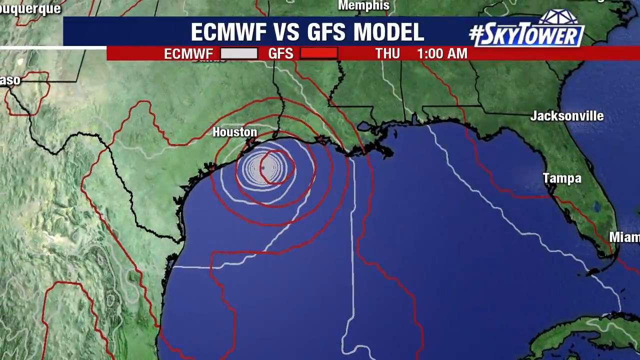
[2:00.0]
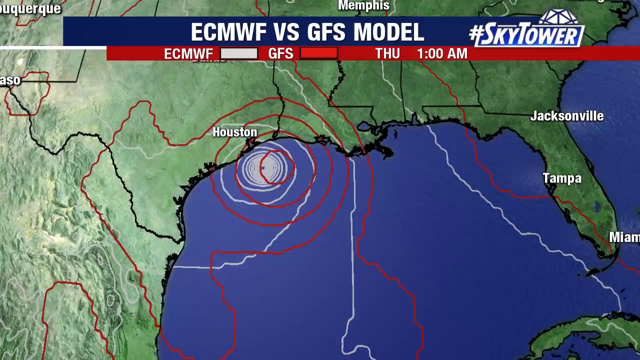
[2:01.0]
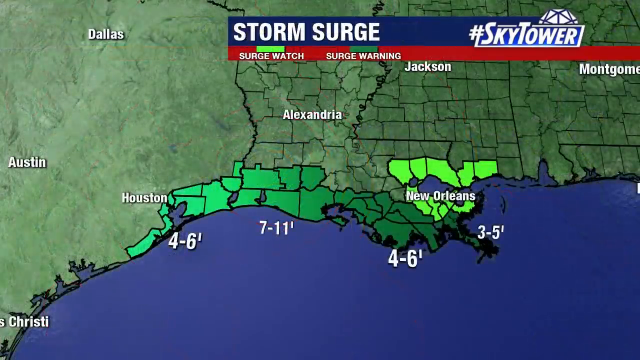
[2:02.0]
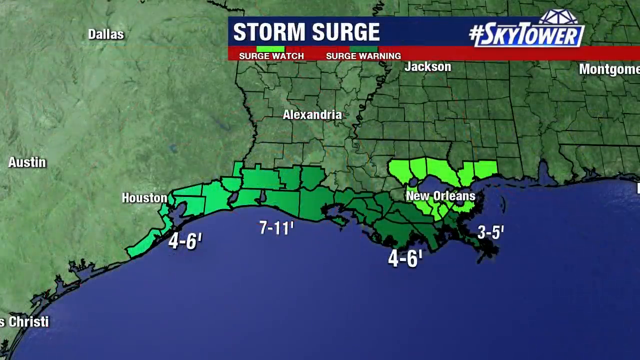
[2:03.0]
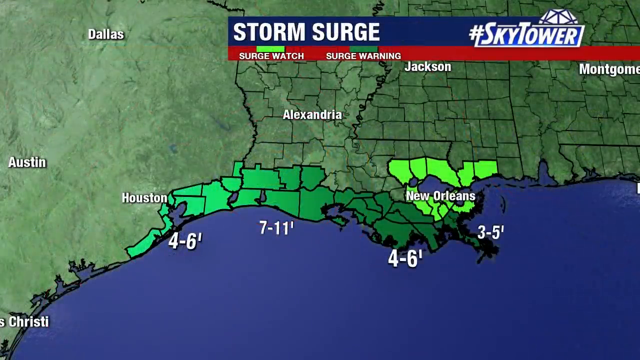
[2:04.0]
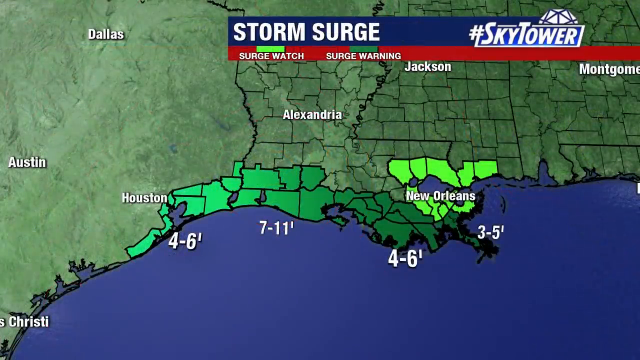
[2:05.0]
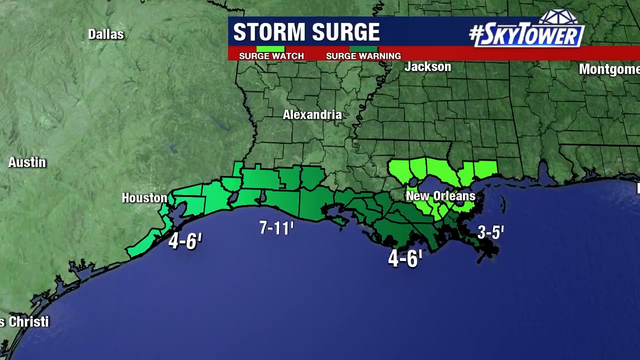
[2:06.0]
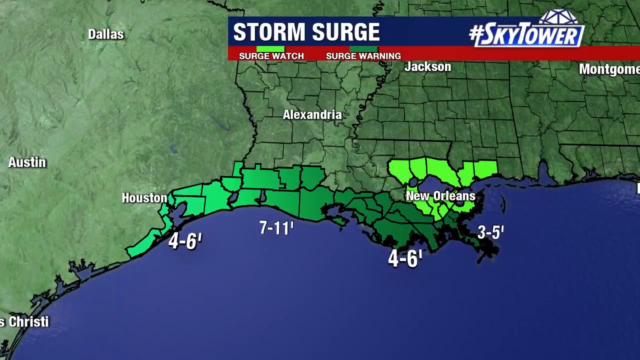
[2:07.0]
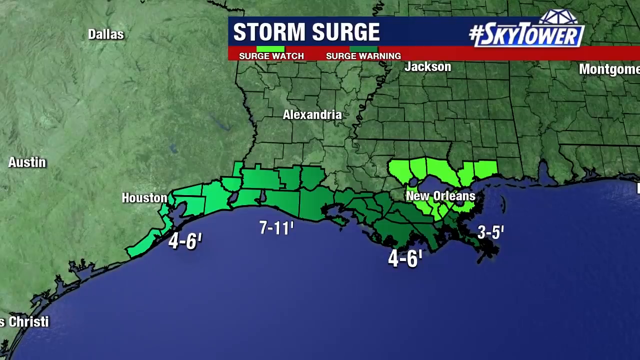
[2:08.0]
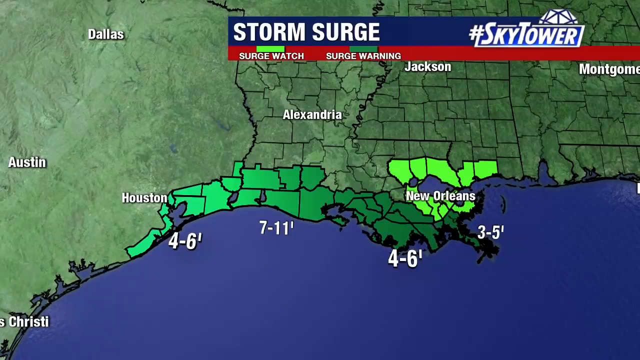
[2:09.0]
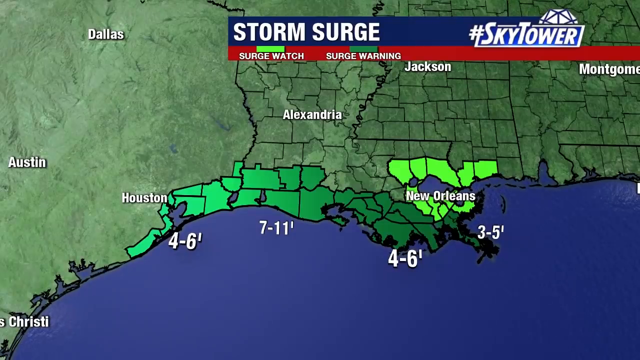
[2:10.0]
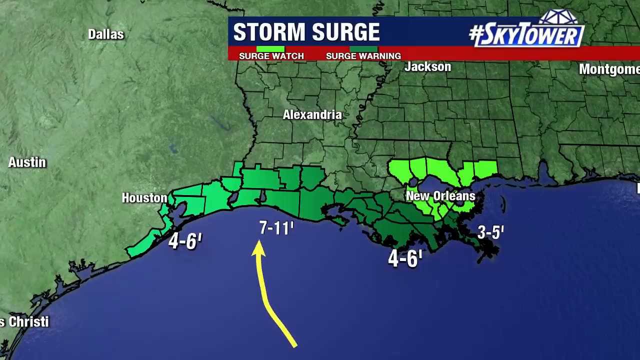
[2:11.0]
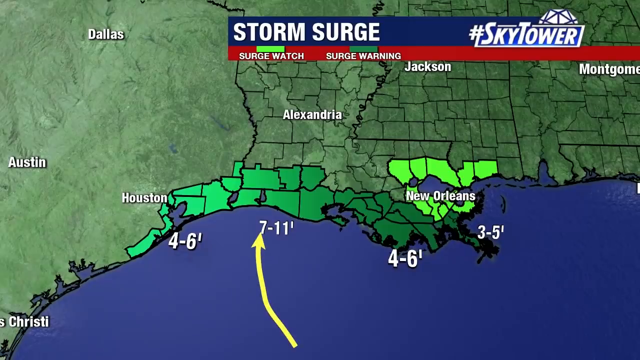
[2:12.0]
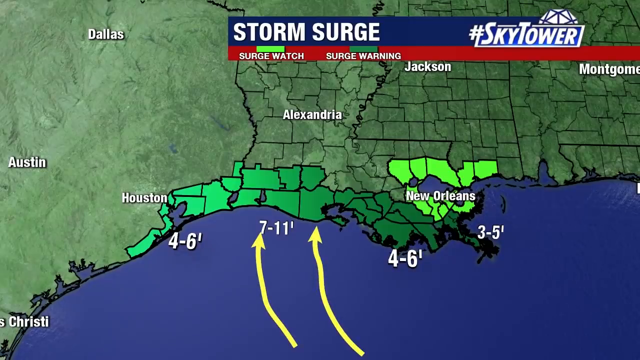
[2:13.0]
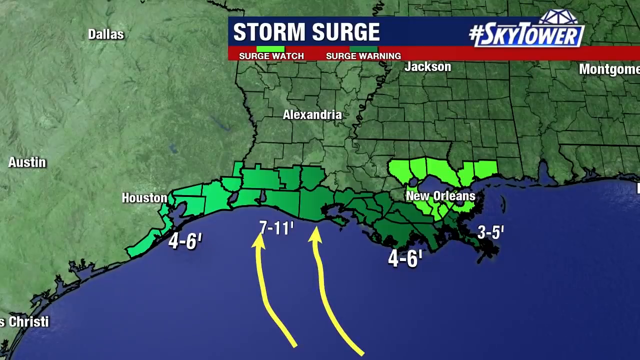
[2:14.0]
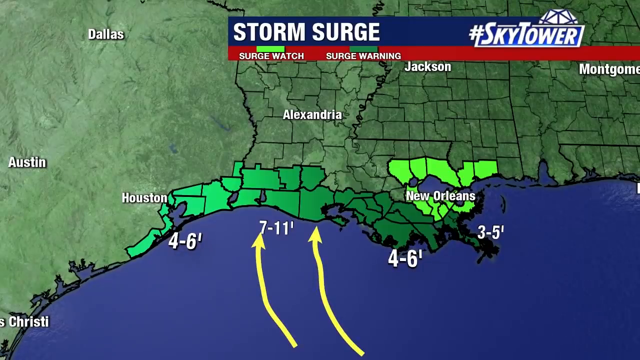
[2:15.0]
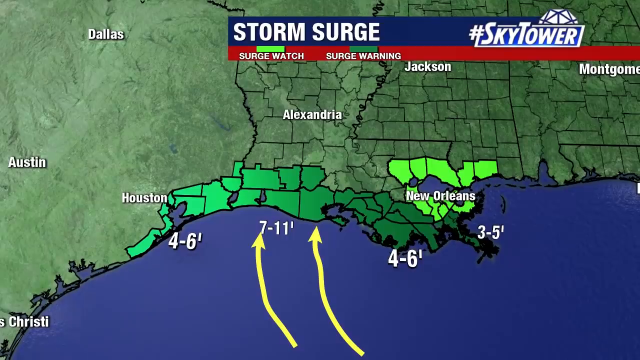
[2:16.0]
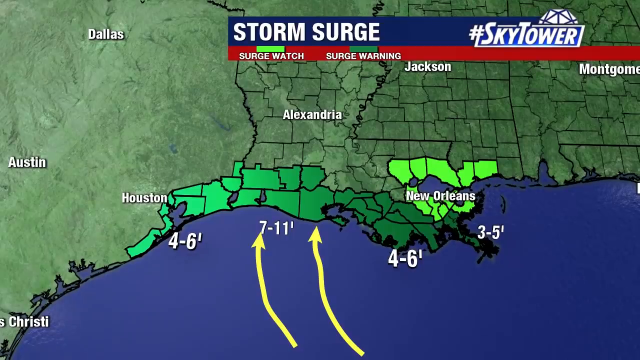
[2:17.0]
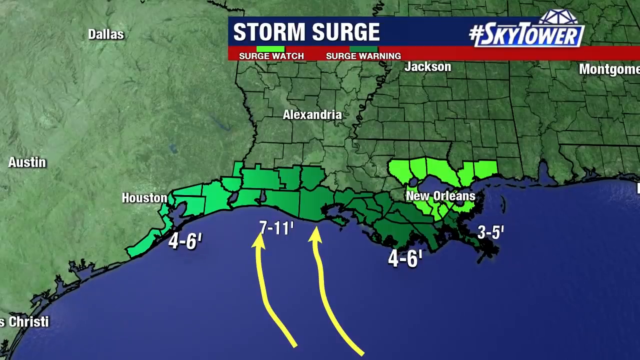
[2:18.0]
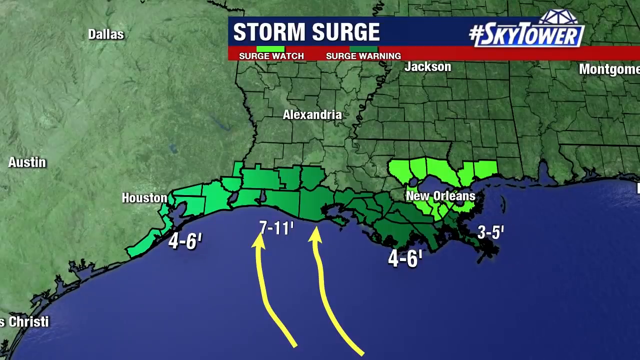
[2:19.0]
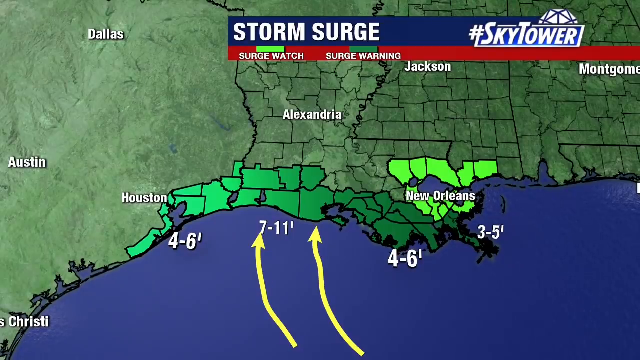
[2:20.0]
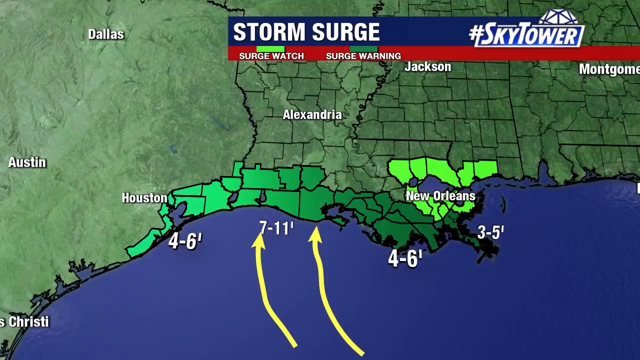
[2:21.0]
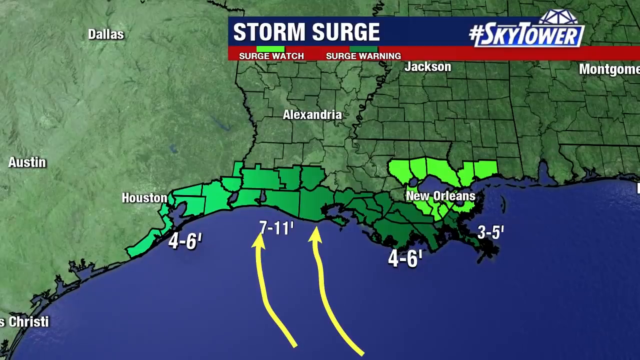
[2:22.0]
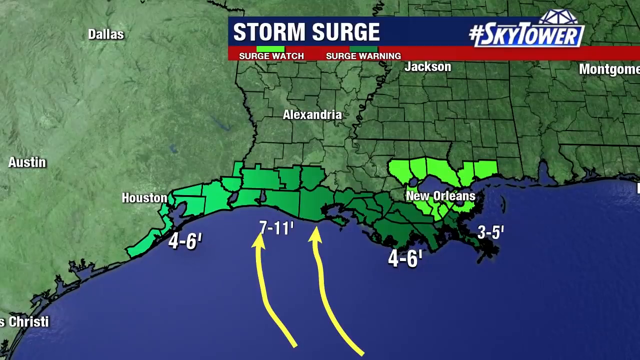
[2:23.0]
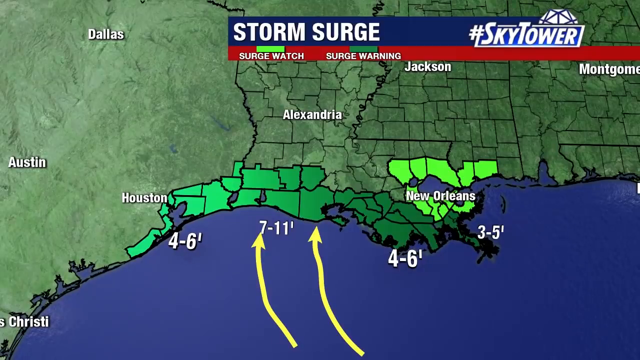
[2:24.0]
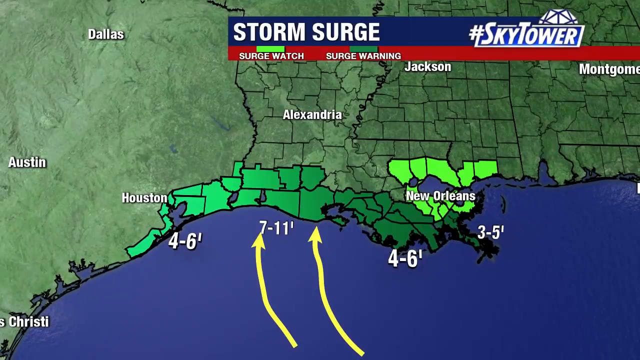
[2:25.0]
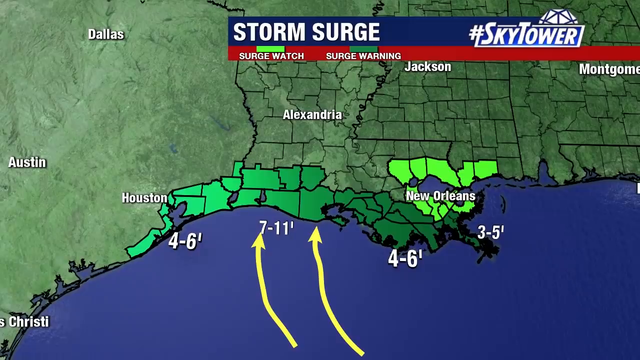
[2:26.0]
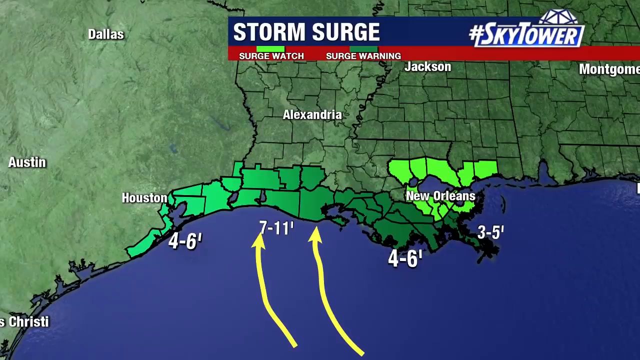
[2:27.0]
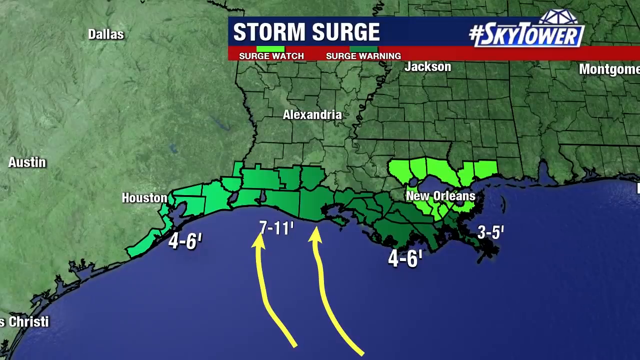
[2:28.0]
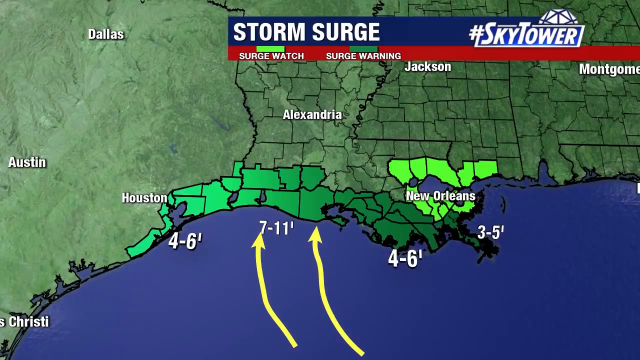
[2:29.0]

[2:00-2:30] The ECMWF model, shown as the white lines, has the storm apparently hitting at Houston, while the GFS model has it hitting a little to the east of Houston, supposedly around Thursday at 1 AM. The focus then moves to storm surge. A surge watch is shown for areas of New Orleans, with surges of three to five feet; areas below New Orleans show four to six feet, other areas around Texas and other parts of Louisiana show seven to 11 feet, and the area around Houston shows four to six feet. The projected landfall is toward the middle and western coast of Louisiana.